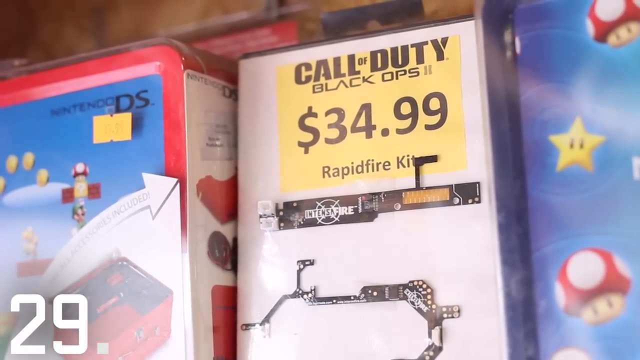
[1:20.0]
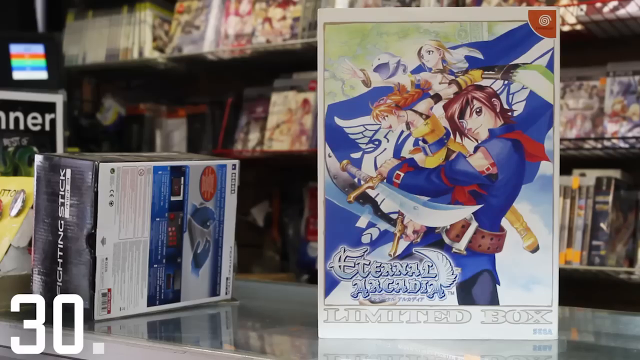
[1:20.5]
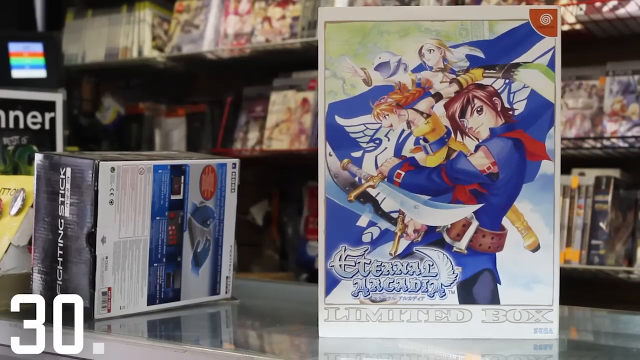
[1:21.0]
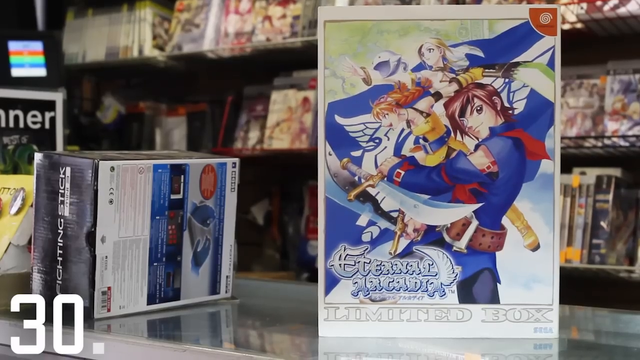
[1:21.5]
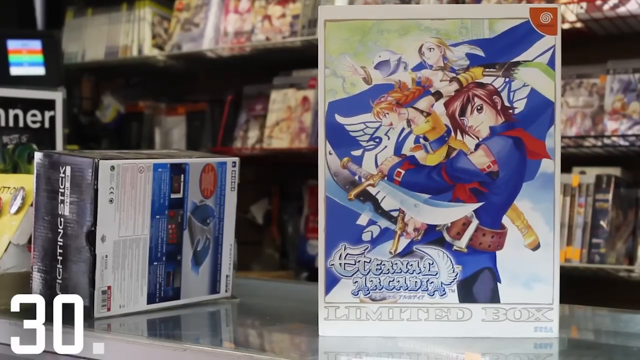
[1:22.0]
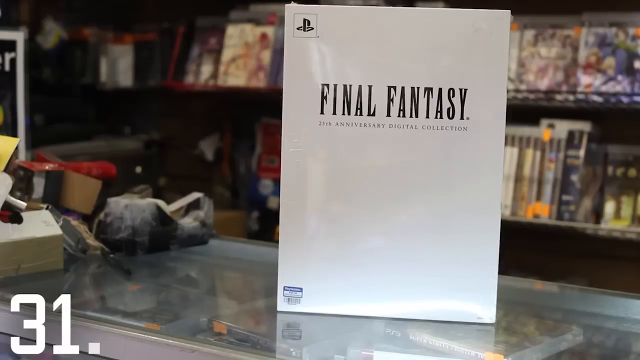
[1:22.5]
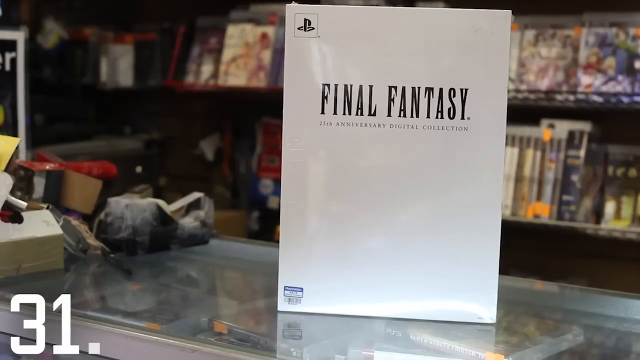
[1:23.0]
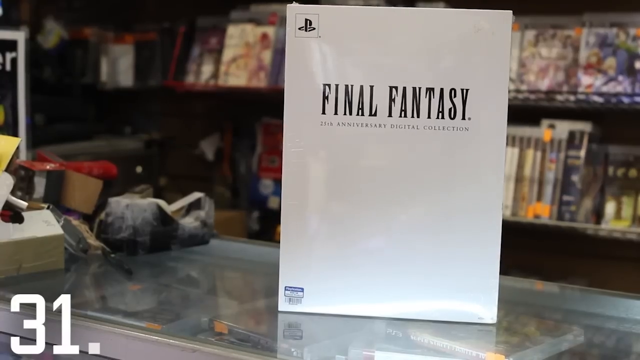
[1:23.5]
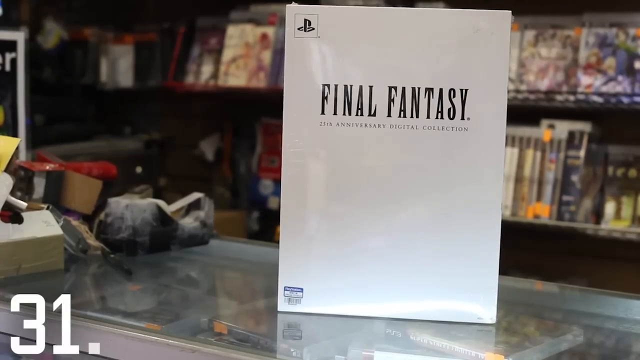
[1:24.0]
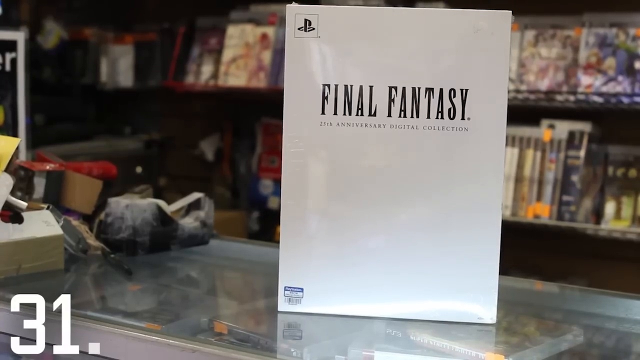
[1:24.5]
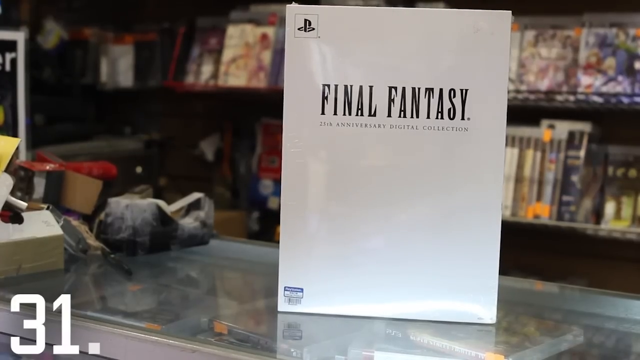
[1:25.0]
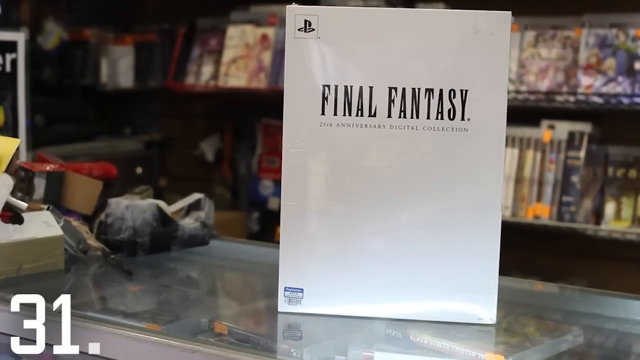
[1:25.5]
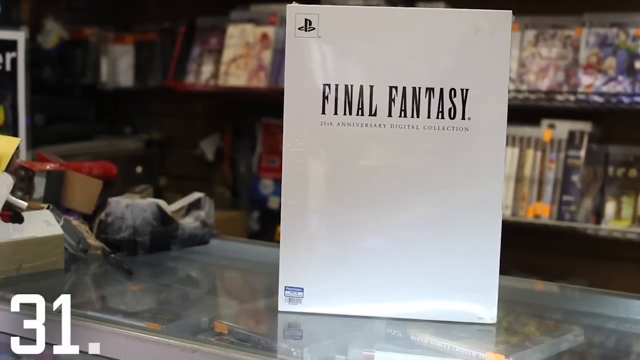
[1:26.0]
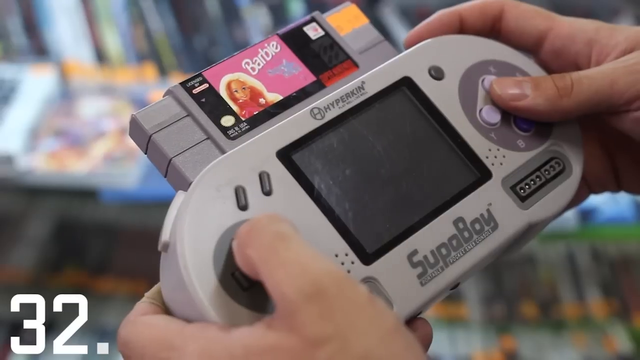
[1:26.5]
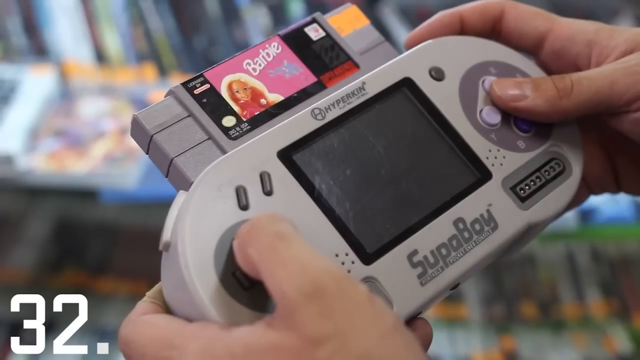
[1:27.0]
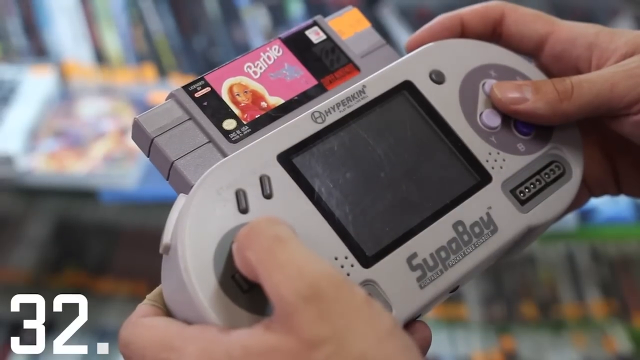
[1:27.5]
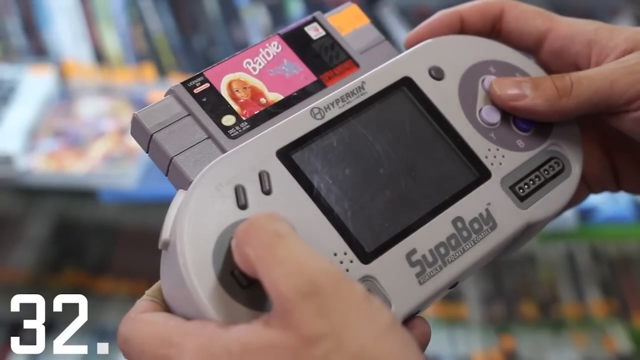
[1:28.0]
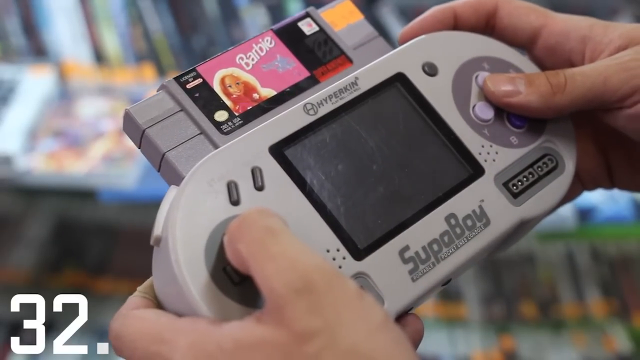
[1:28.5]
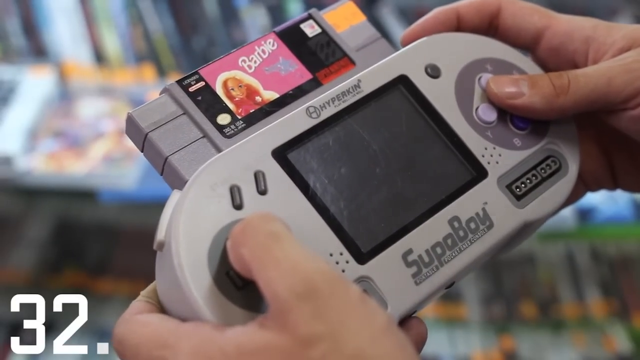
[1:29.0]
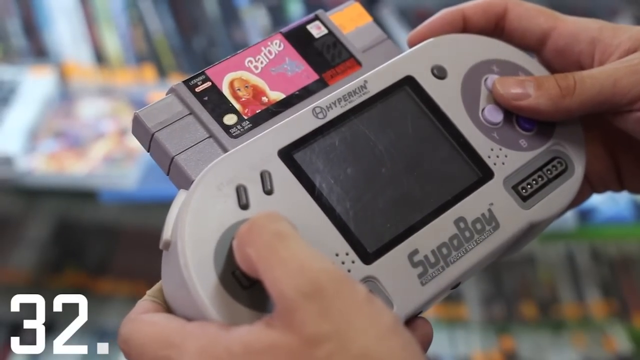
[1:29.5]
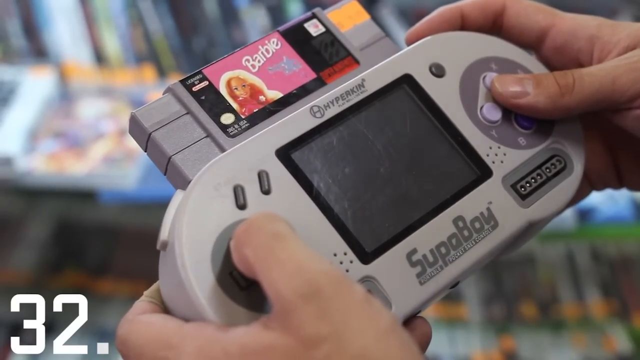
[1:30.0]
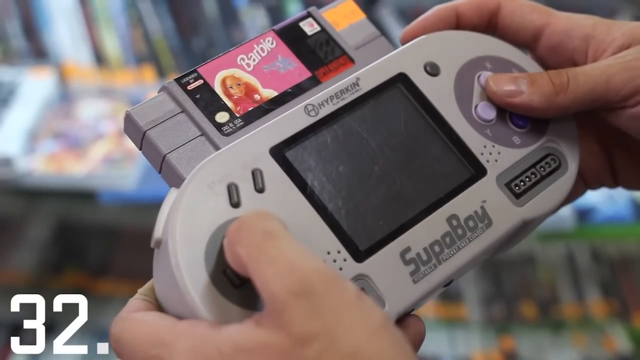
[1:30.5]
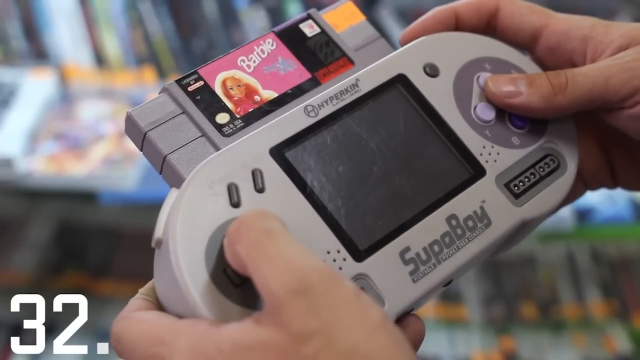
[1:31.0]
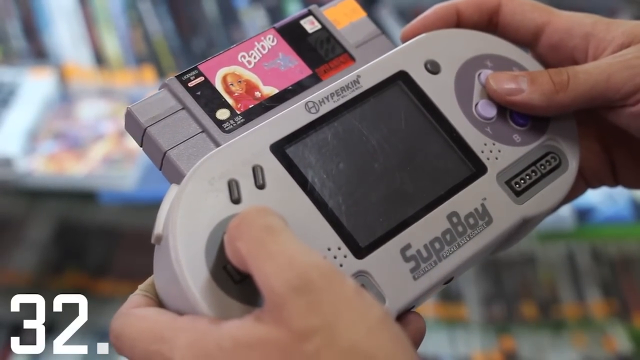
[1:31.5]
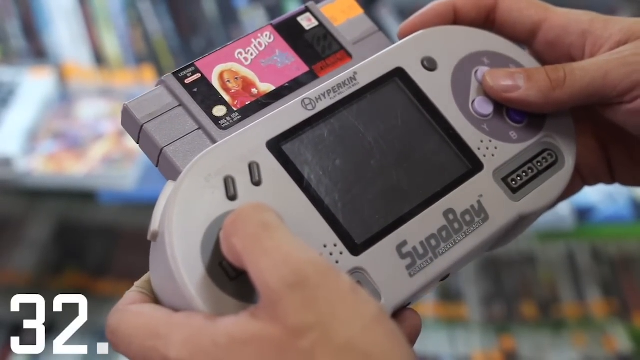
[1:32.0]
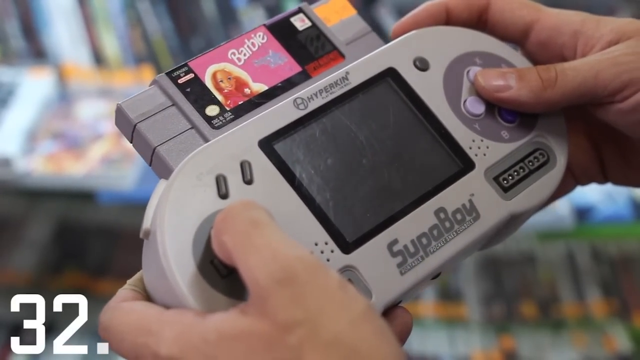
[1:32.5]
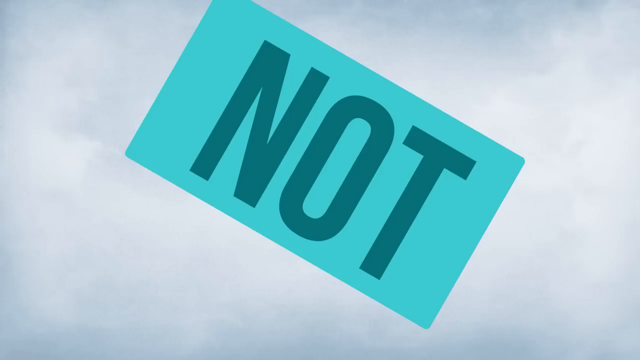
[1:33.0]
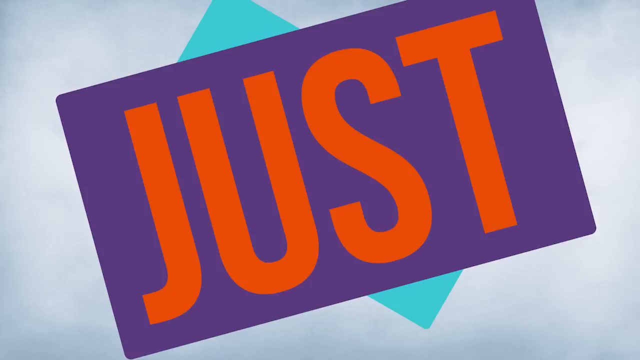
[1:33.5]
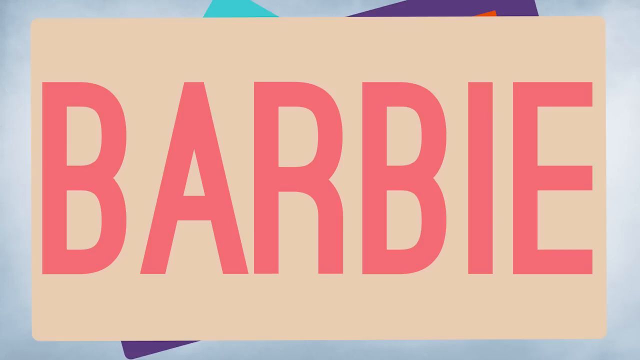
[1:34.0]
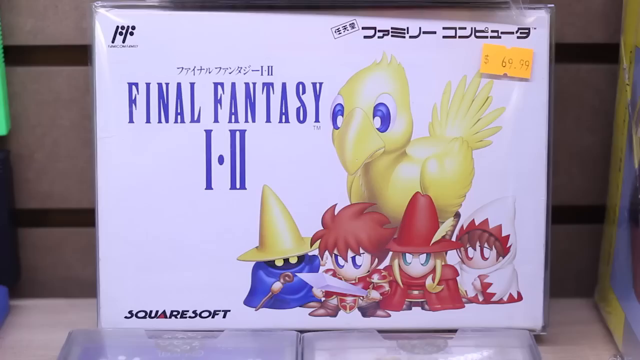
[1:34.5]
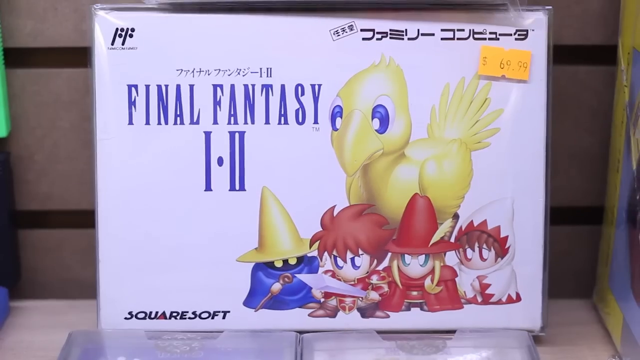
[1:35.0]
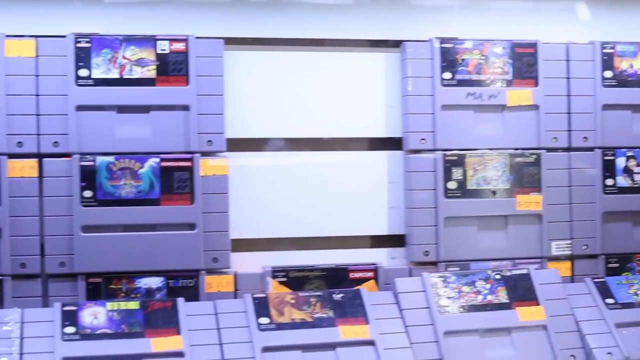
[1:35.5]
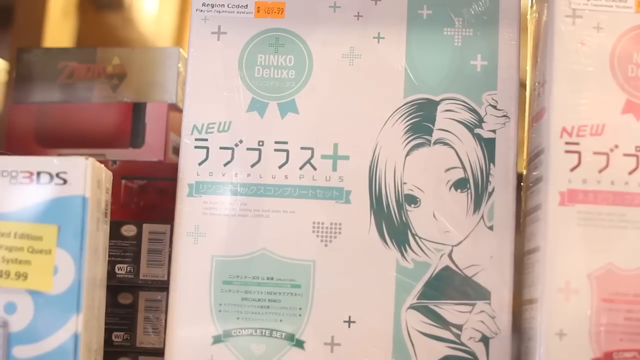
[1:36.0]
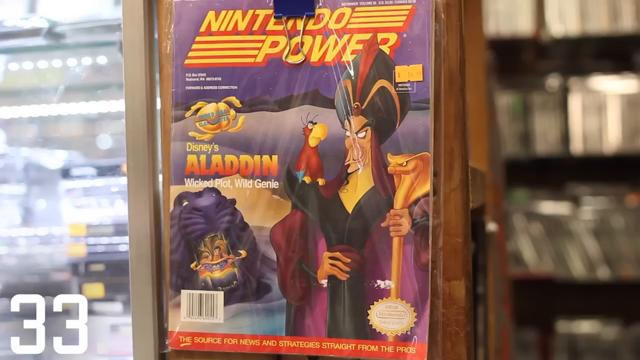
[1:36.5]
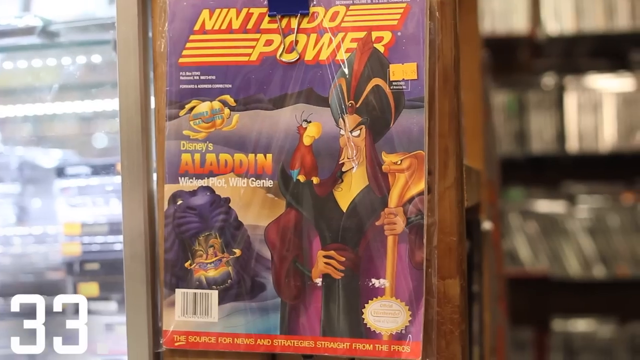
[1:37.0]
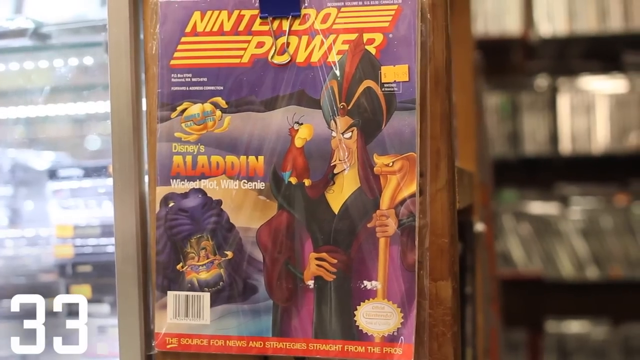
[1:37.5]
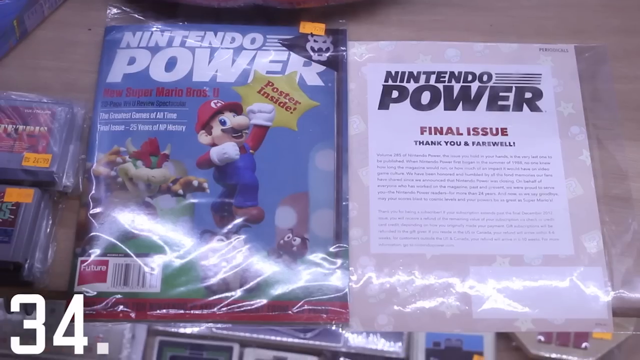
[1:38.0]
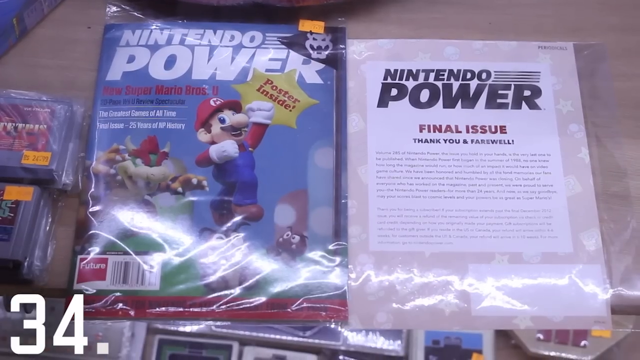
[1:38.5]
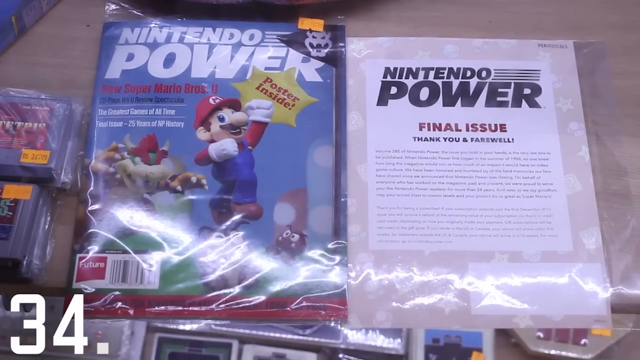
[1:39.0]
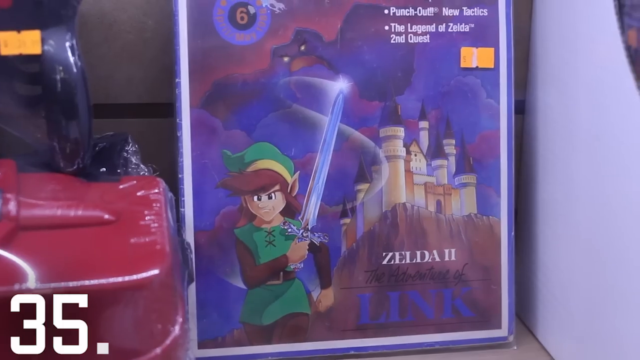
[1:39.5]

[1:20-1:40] A cartridge in some kind of box called Call of Duty Black Ops is shown, with "$34.99" and "Rapid Fire Kit." Something called Eternal Arcadia Limited Box appears, apparently for the Dreamcast, and next to it on the table is something called a Fighting Stick in its own box, with a bunch of games on a shelving display behind it. A Final Fantasy 25th Anniversary digital collection wrapped in cellophane in its original box is shown. A person holds a device apparently called a Superboy, which looks kind of like it has Super Nintendo controls and looks like it can play Super Nintendo cartridges; a Super Nintendo Barbie cartridge is inserted in it. Final Fantasy I and II is shown in an original box for 69-something, with some Japanese writing, "Squaresoft" at the bottom, and some characters from the game with the Chocobo. A display with a bunch of Super Nintendo cartridges follows. The video then switches to something called Rinko Deluxe in a box with Japanese writing and the word "New," with what looks like an enemy male on the right of the box. An old Nintendo Power magazine with Disney's Aladdin on the cover is shown.